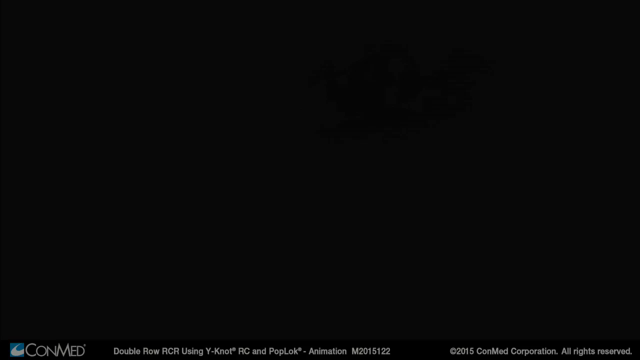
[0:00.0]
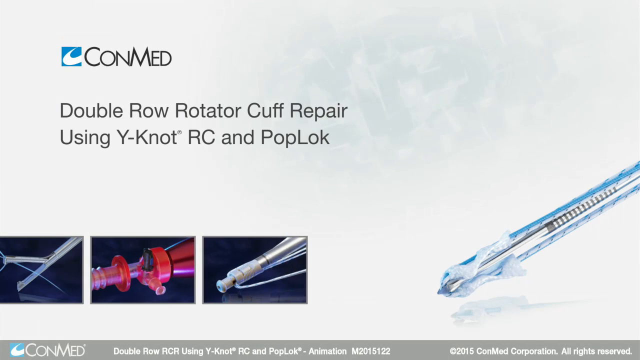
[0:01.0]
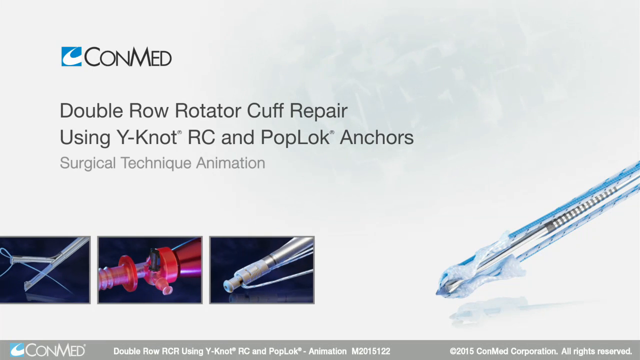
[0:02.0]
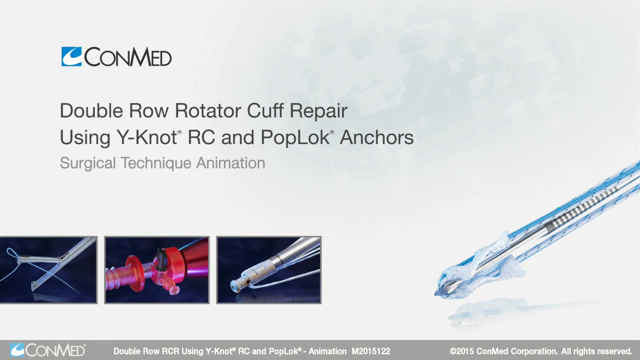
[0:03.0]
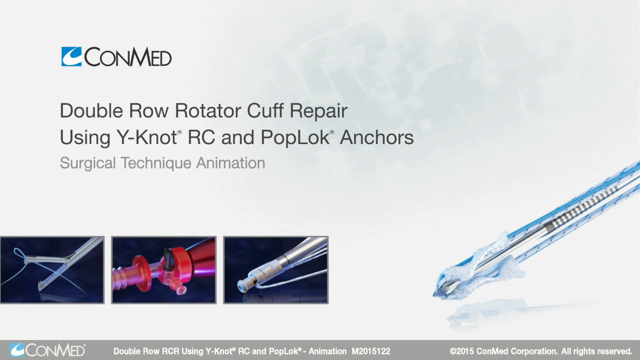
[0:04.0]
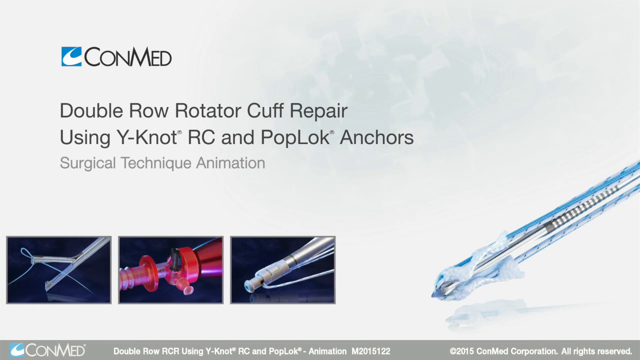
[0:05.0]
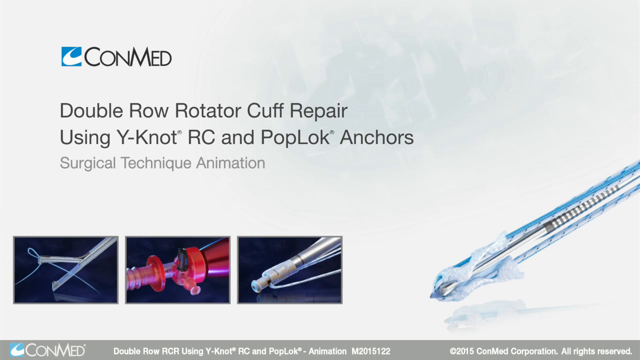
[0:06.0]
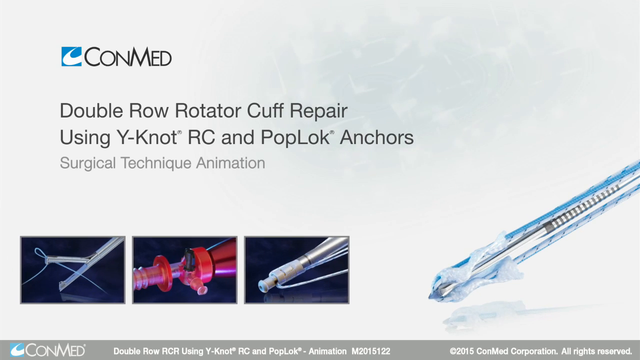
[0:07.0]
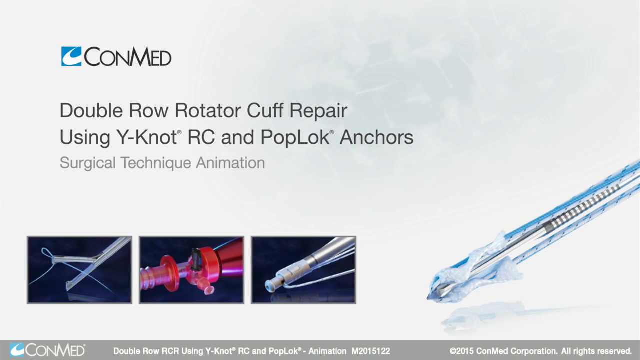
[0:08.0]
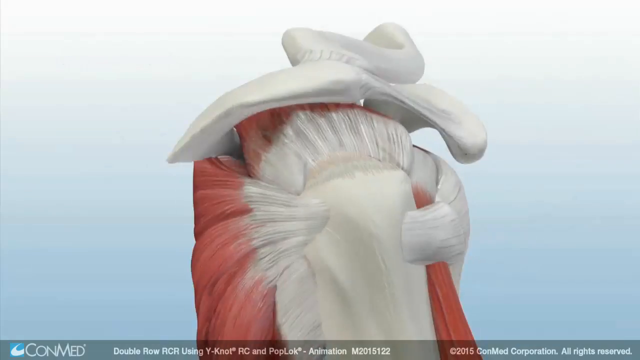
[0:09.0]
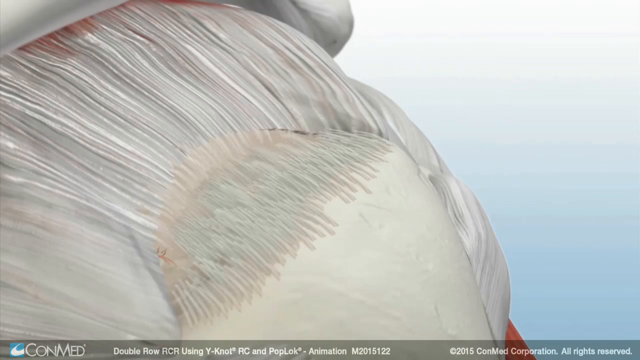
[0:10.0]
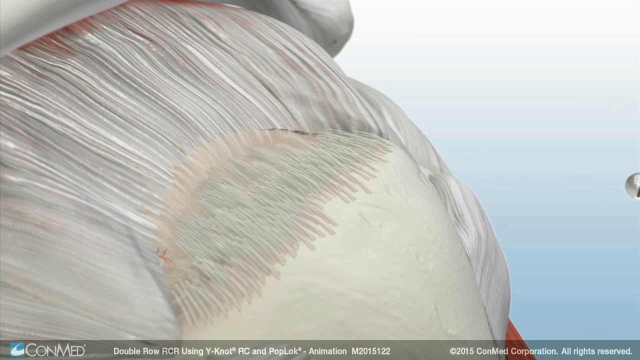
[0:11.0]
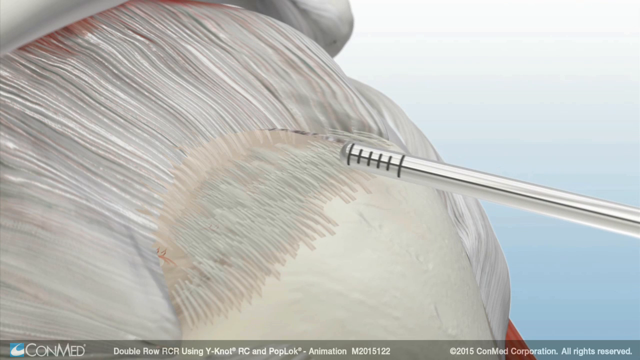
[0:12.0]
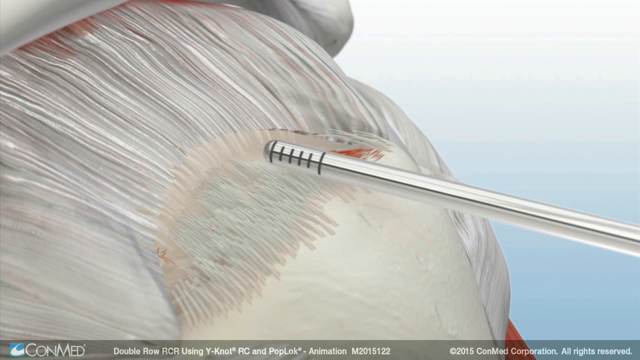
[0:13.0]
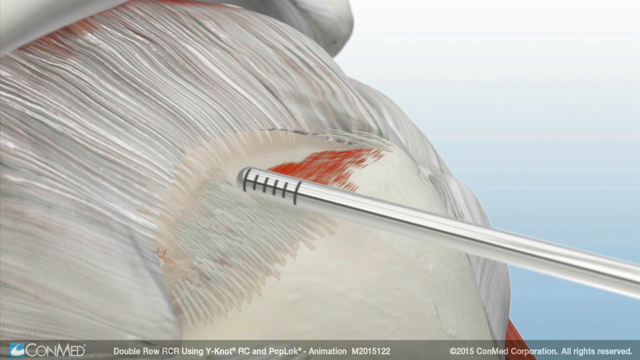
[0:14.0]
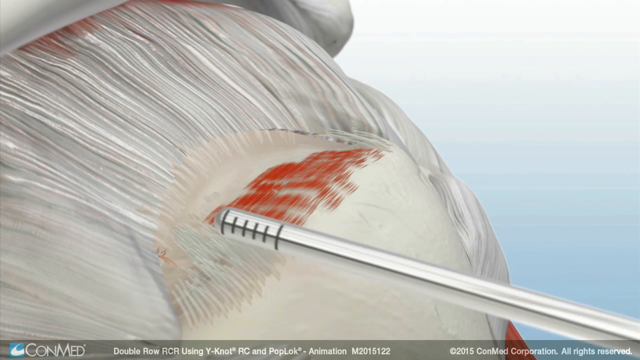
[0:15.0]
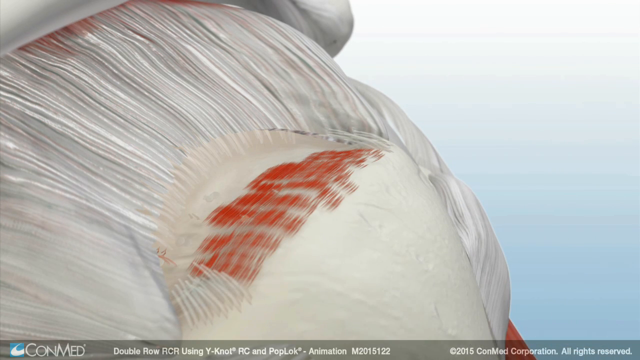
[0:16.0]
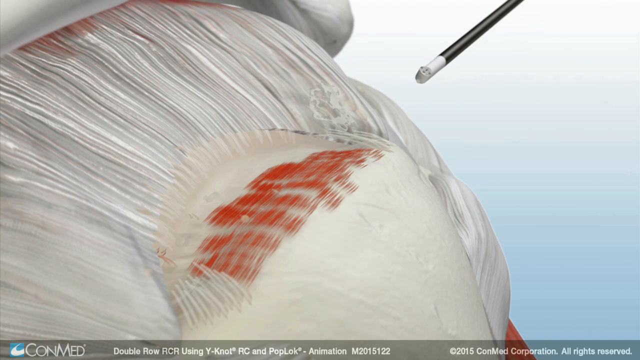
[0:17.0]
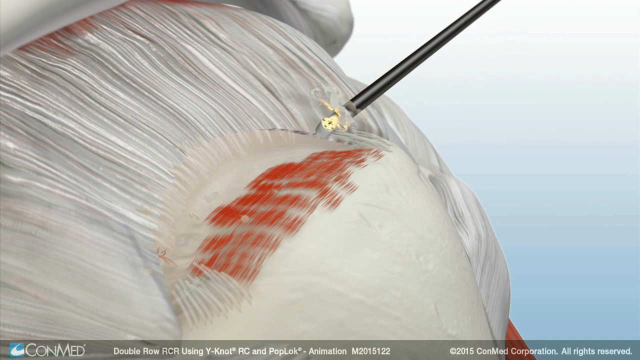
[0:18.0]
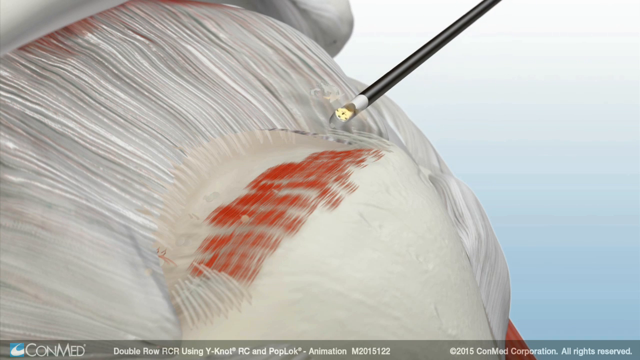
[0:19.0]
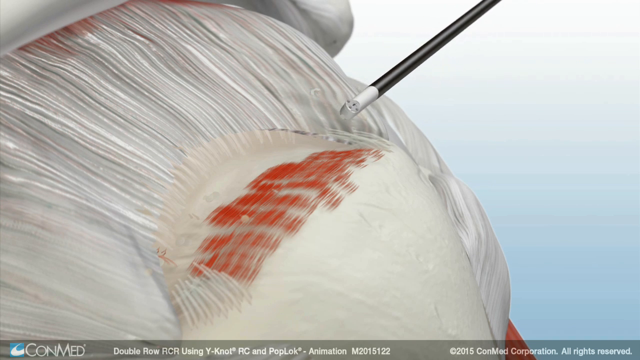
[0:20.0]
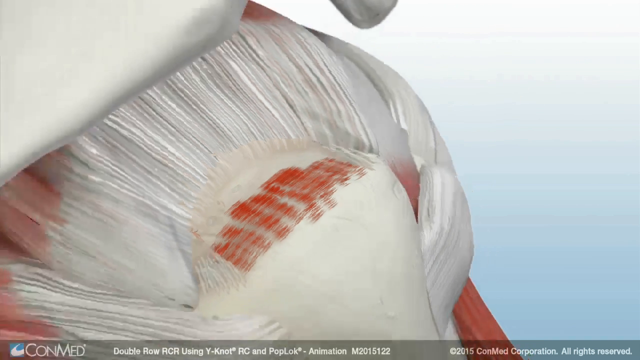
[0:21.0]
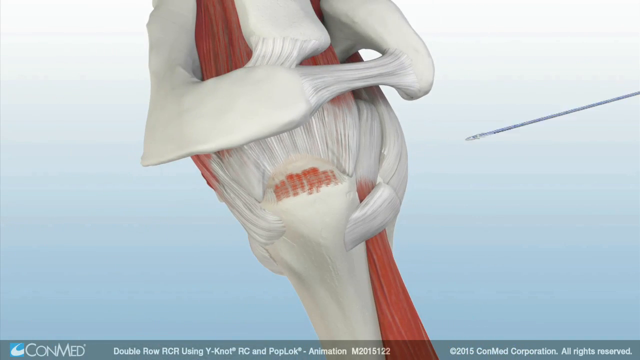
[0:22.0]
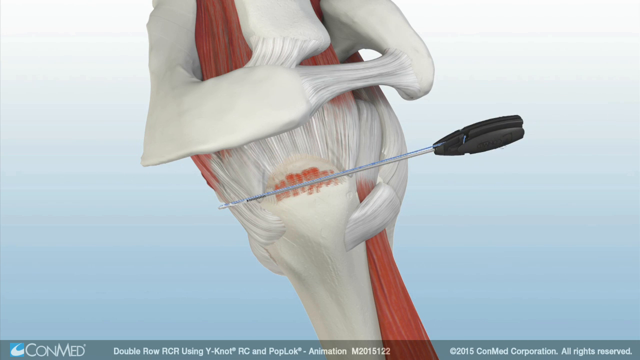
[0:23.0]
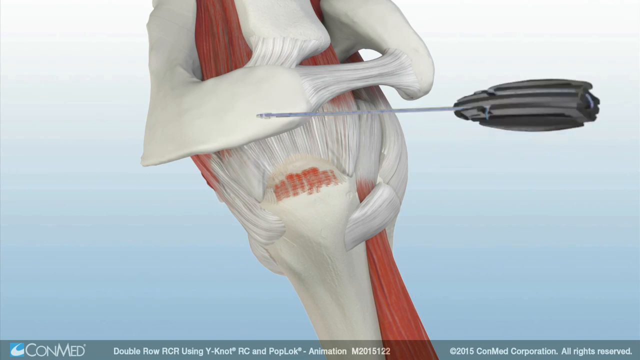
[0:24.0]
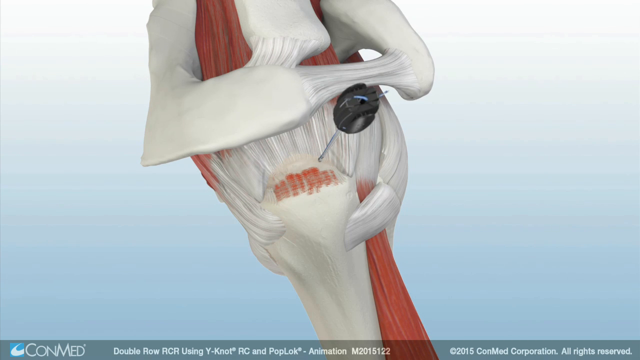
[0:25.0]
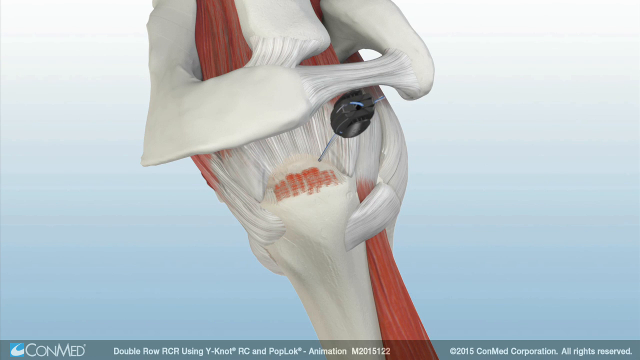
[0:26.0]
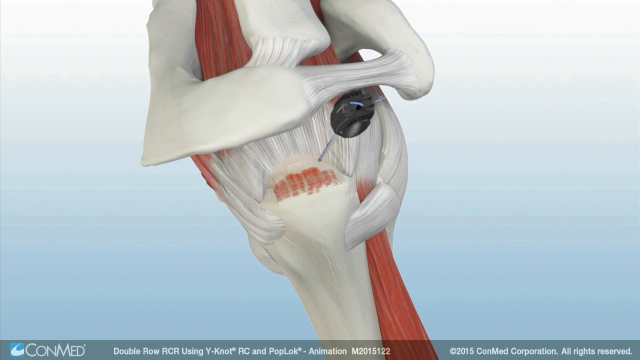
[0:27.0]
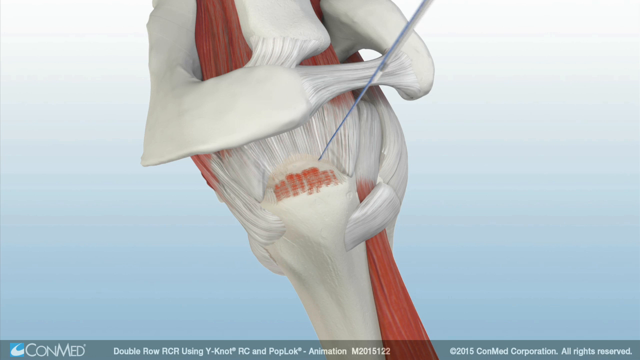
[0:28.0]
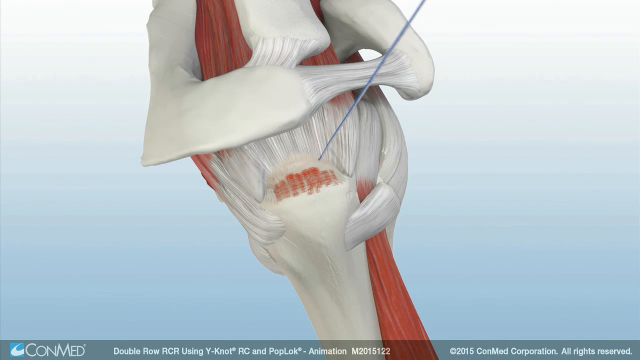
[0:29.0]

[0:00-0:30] The video opens with a title screen that reads "double row rotator cuff repair" and "surgical technique animation." An animation then shows an illustration of a human shoulder, with the shoulder muscles, the bone and the tendons visible. A slim metal object is used to touch a portion of the tendon that looks detached from the shoulder bone. The long pointed instrument keeps touching this portion and appears to be rubbing off the tendon, revealing a rough red patch on the bone, and this action continues. Next, a long sharp instrument with a black handle is thrust across the area where the tendon was erased off the bone, and the instrument is then pointed into the very edge where the tendon and the bone meet.